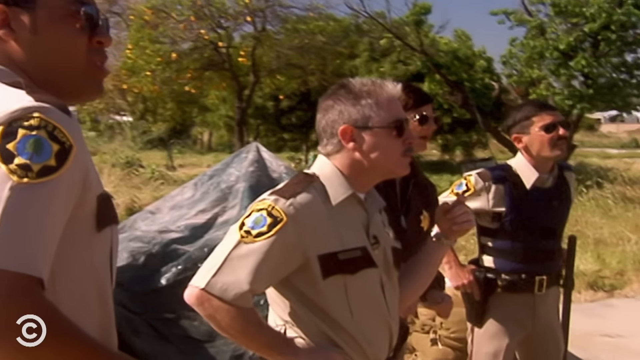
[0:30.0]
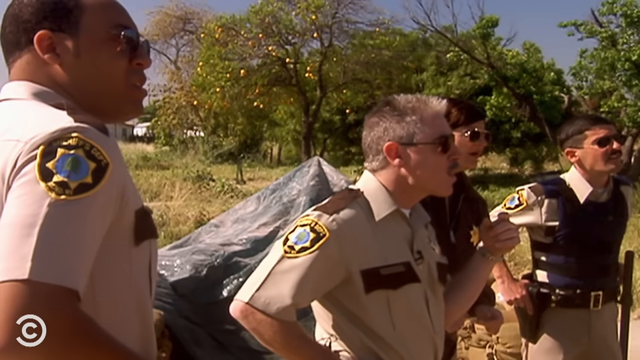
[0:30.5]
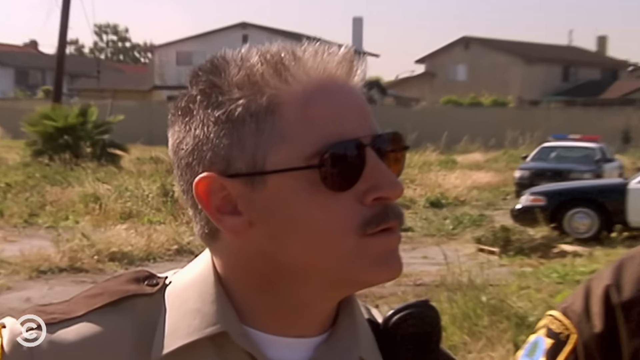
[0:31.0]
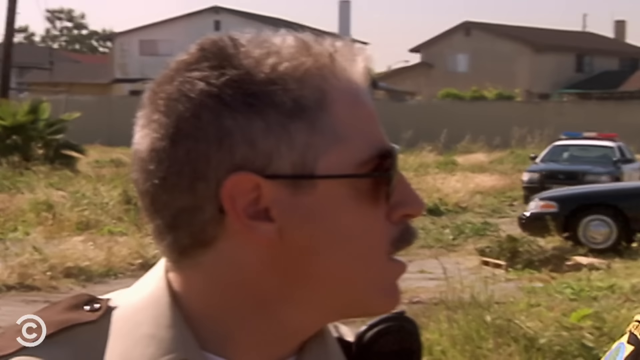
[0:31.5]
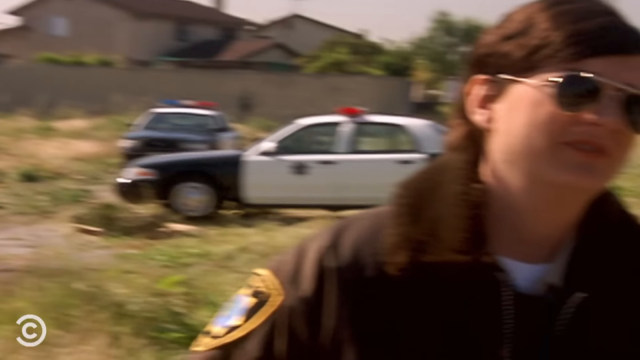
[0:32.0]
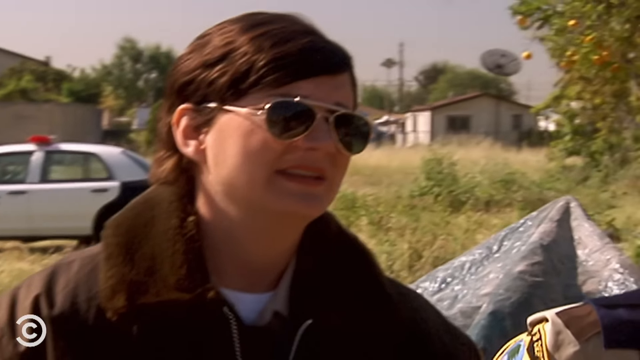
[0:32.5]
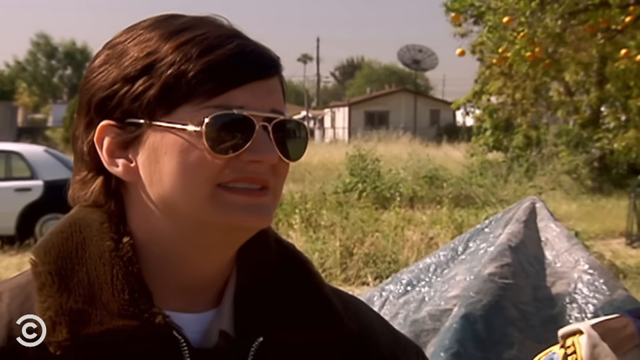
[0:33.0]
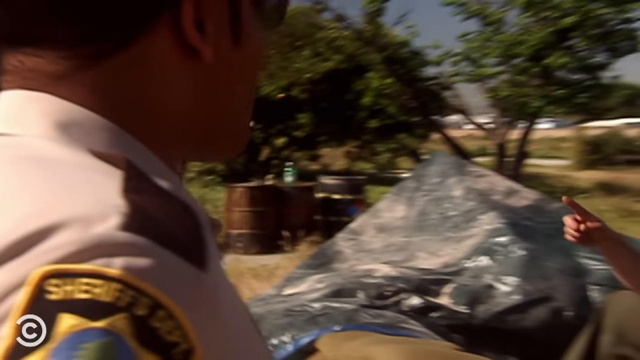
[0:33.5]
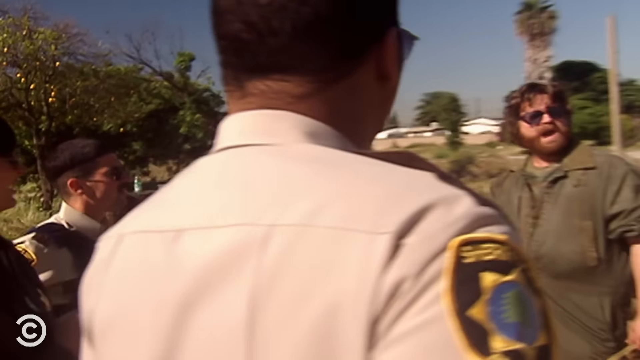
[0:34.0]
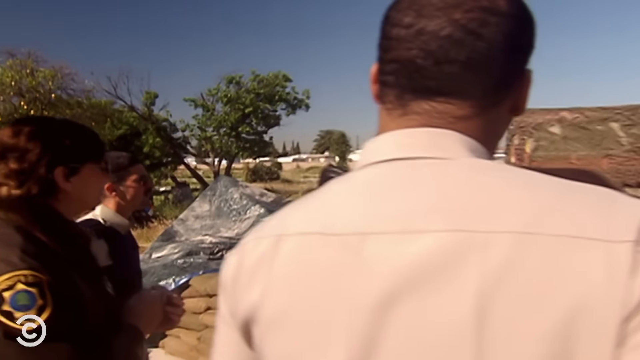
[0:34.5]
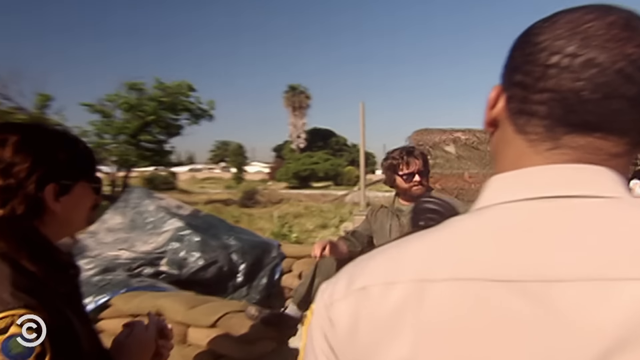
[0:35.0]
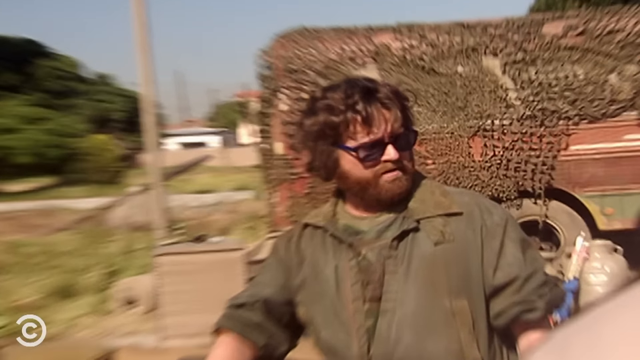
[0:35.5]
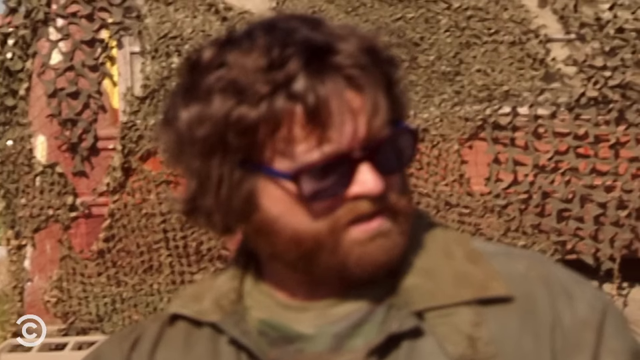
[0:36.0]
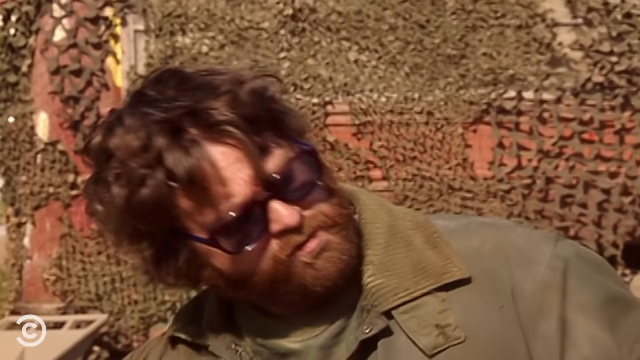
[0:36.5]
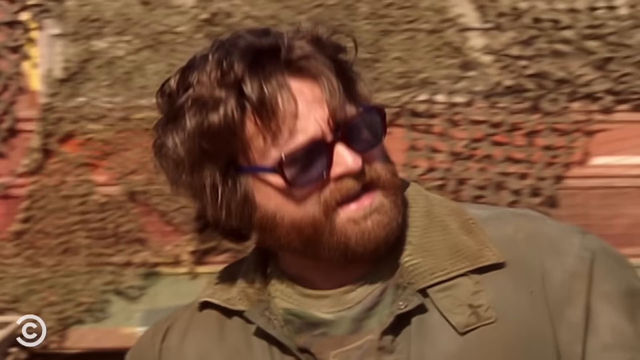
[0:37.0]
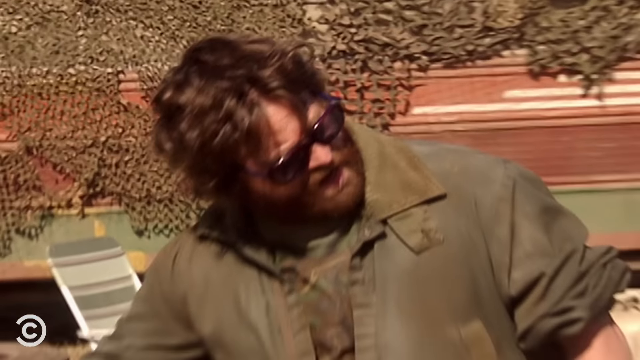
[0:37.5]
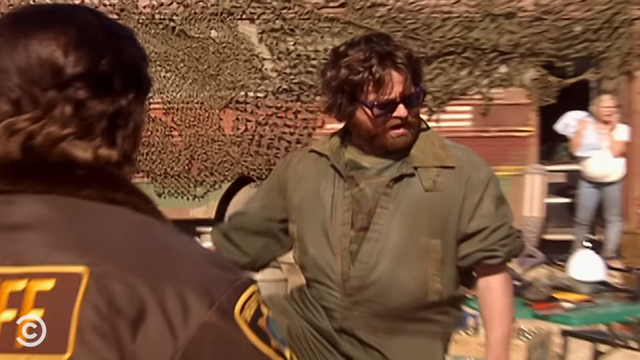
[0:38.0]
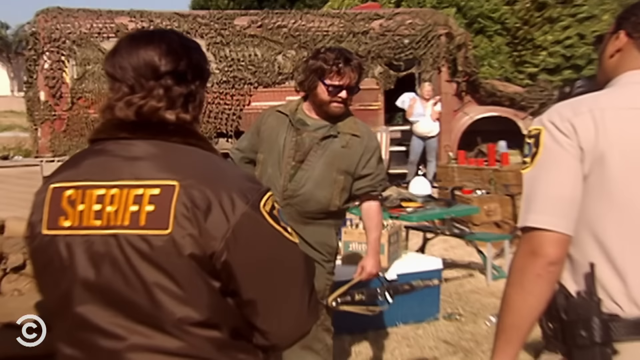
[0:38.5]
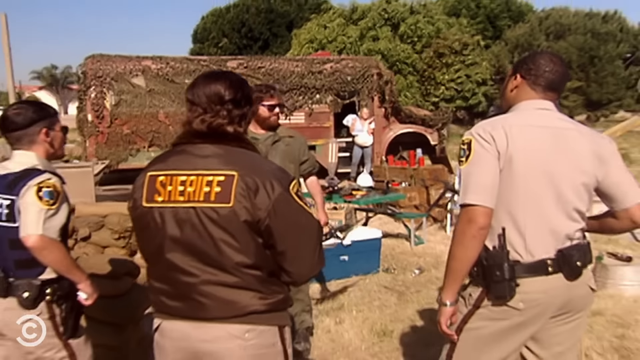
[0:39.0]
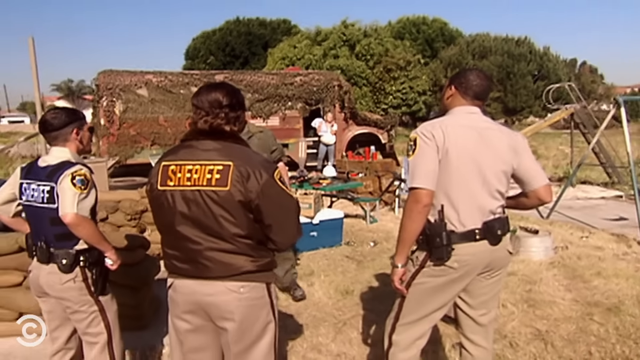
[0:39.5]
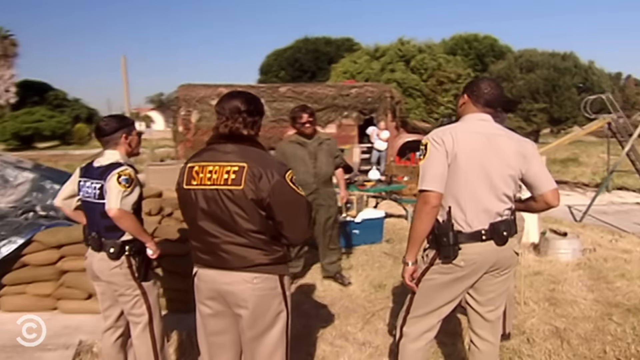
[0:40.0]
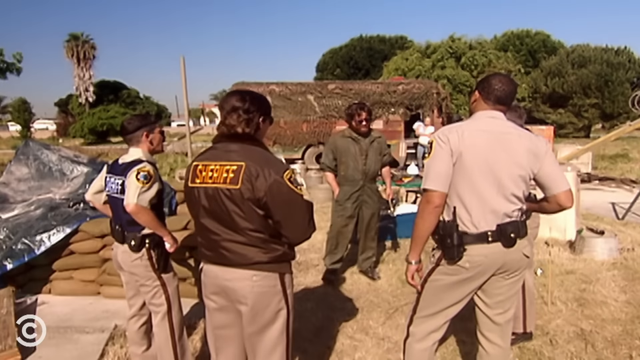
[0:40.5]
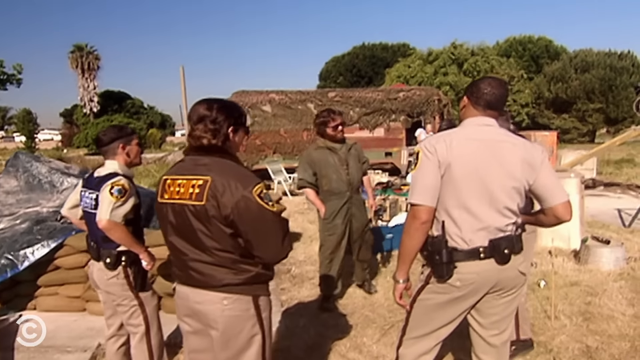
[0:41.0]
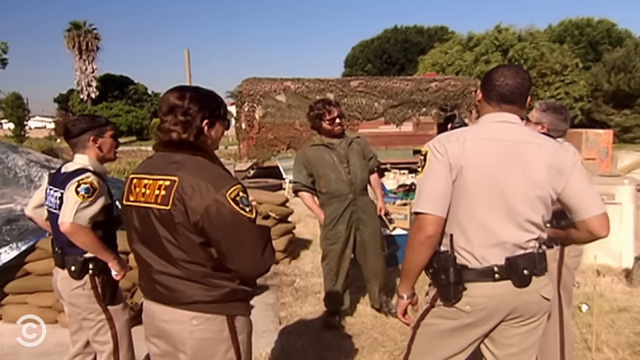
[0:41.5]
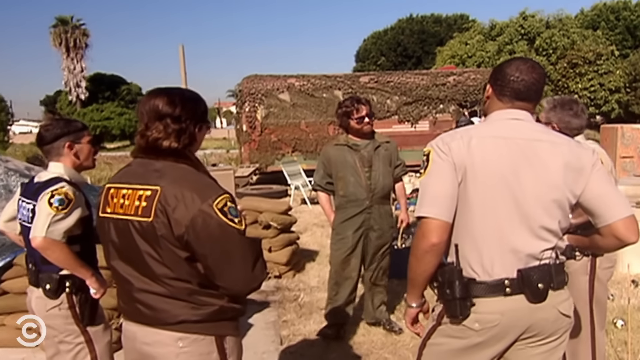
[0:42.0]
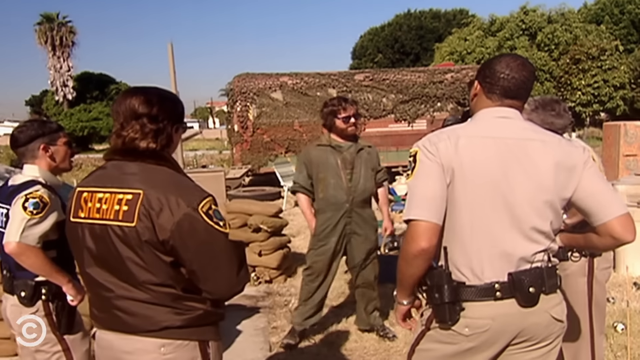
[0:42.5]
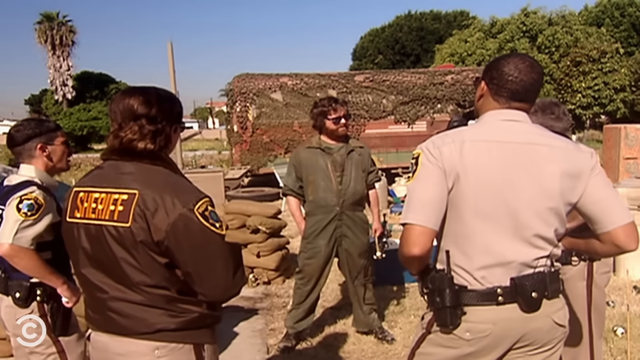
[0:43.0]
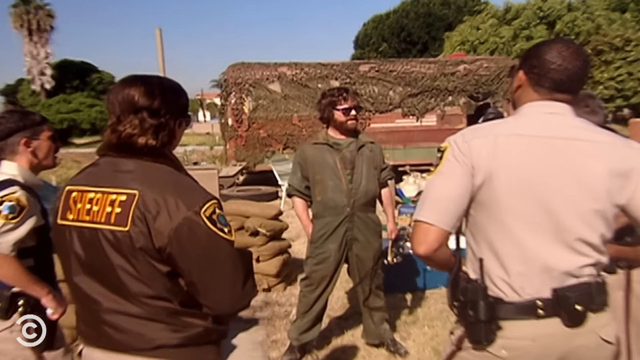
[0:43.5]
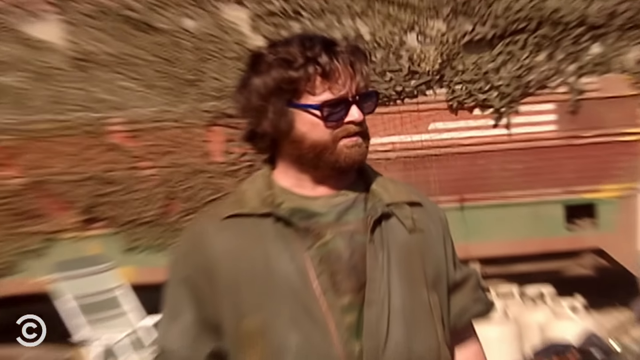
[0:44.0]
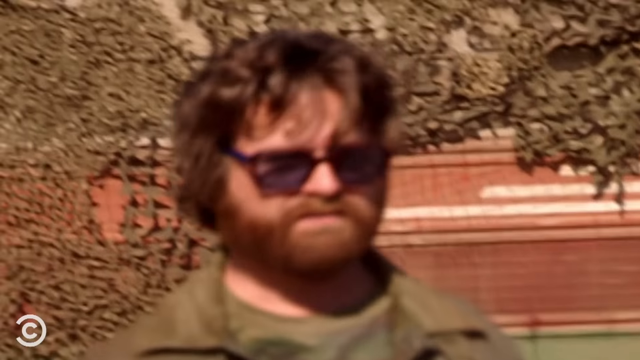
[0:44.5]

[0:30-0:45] One of the four cops is a woman wearing the brown sheriff jacket. They continue talking to the guy, with close-ups cutting kind of randomly between the guy and some of the cops' faces. A bunch of the cops wear sunglasses, and the guy is wearing his again. The woman cop wears aviator sunglasses; the rest do not. Three of the cops appear to be white and one appears to be black; the guy is white. They talk kind of confrontationally. The guy puts his leg up on his cement bag barricade as he talks, almost as if putting on some kind of show for the cops. The shots go back and forth, and the camera sort of swivels as they talk. In the background, the mother of the children is now out of the bus, watching the confrontation.